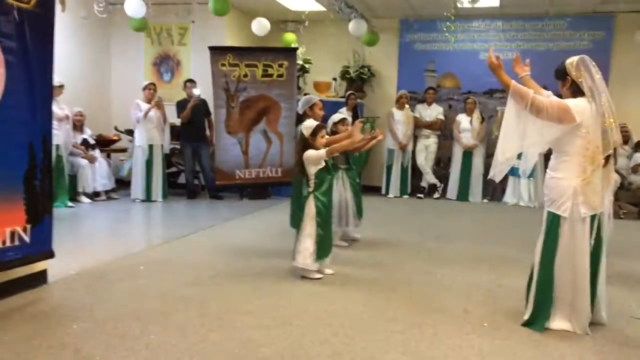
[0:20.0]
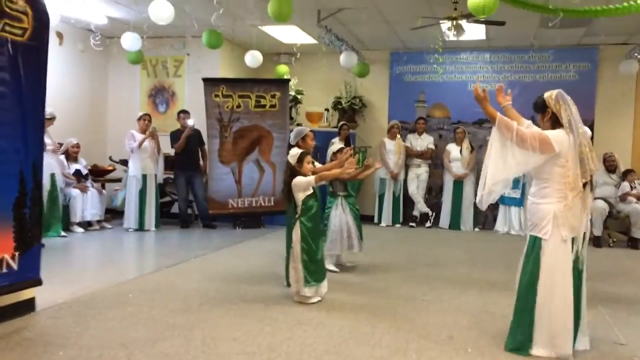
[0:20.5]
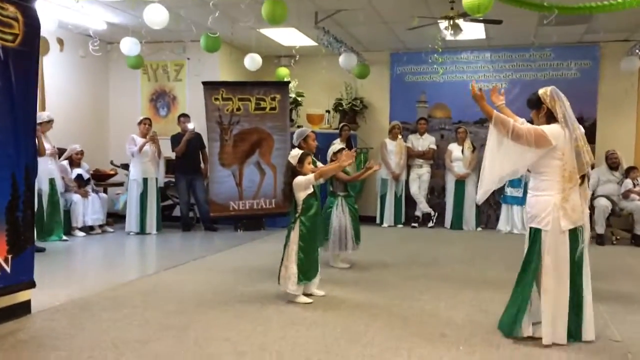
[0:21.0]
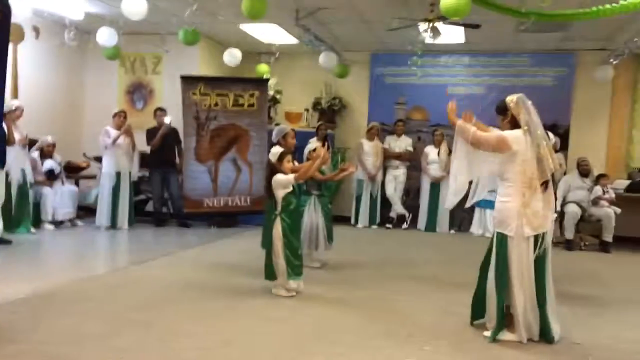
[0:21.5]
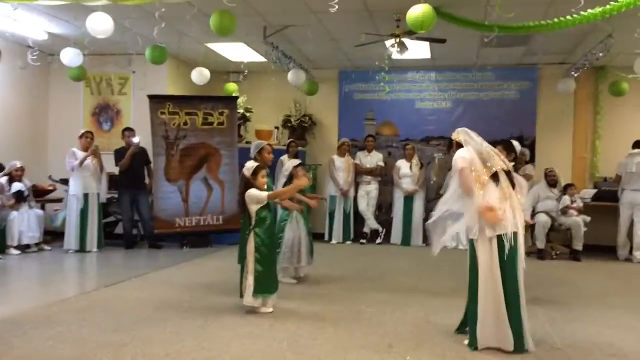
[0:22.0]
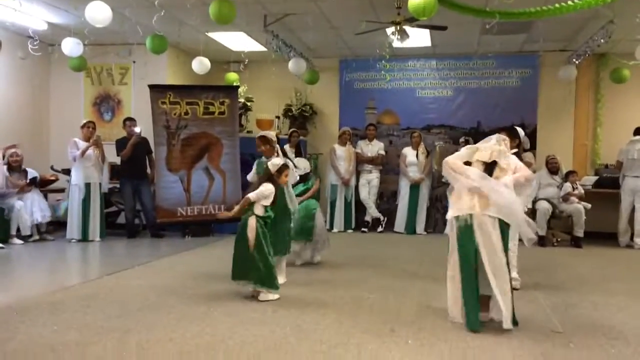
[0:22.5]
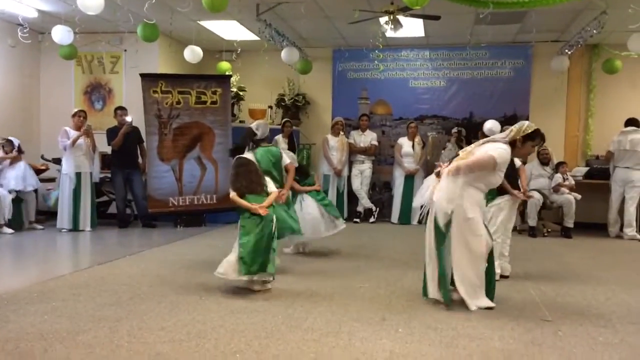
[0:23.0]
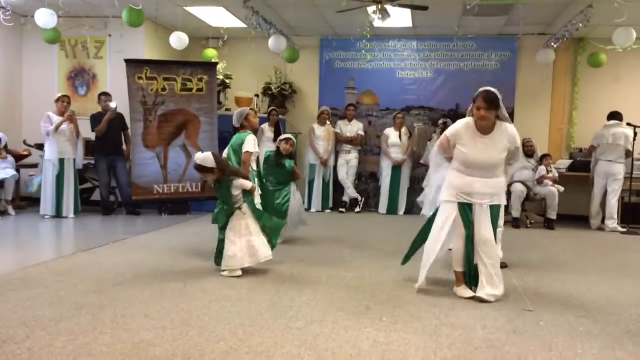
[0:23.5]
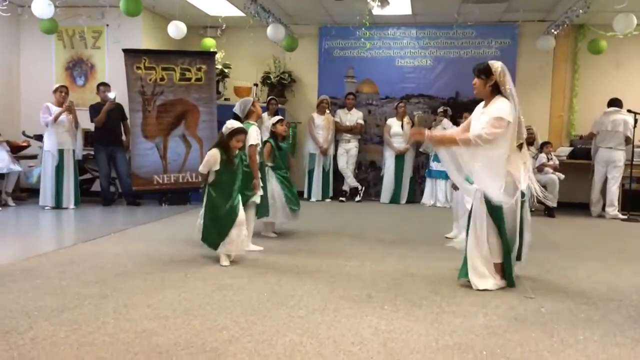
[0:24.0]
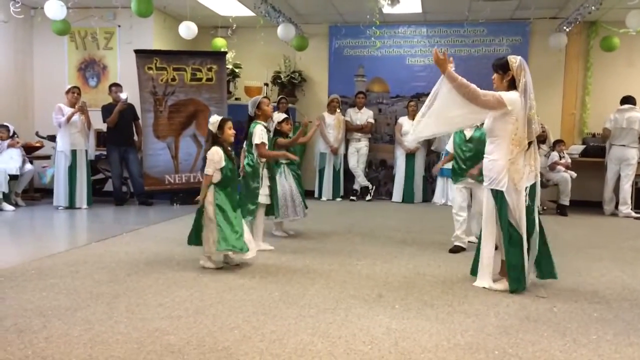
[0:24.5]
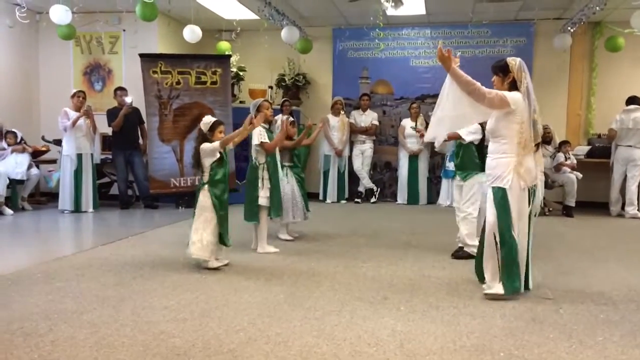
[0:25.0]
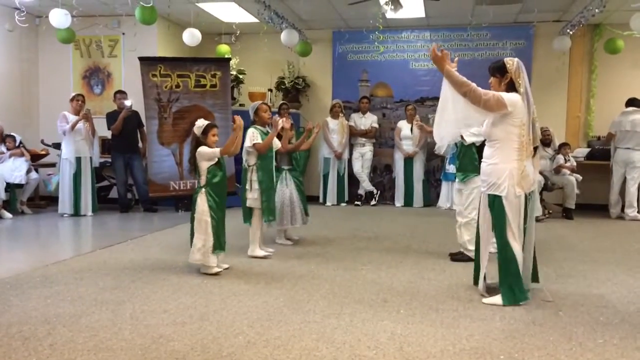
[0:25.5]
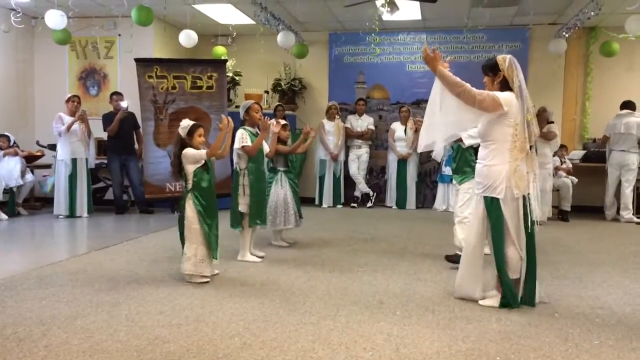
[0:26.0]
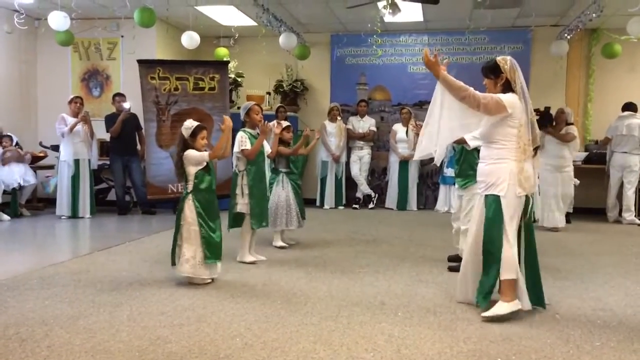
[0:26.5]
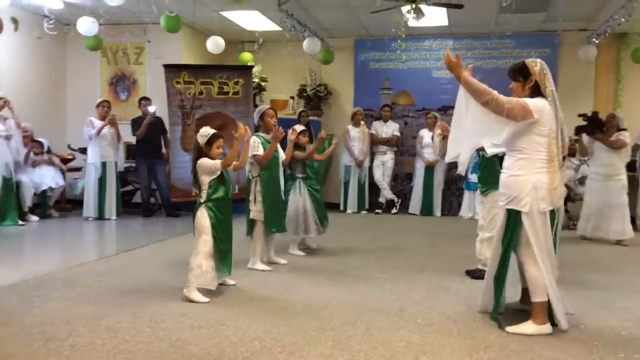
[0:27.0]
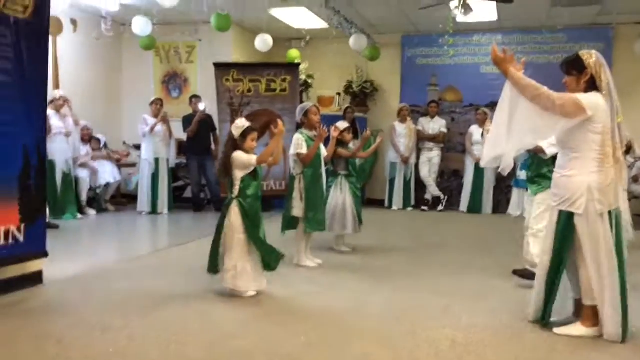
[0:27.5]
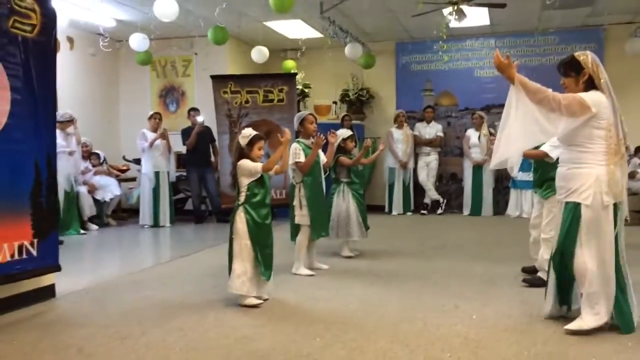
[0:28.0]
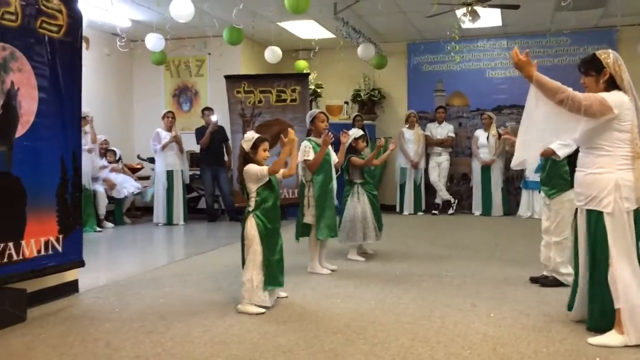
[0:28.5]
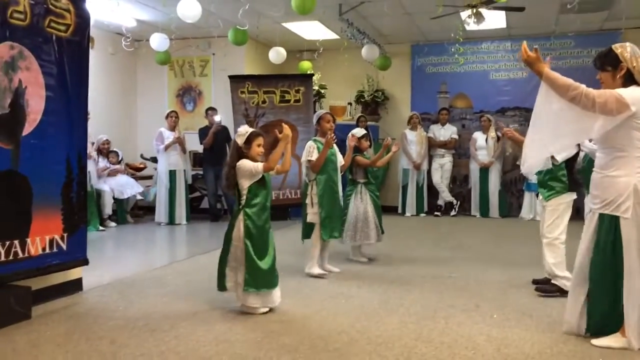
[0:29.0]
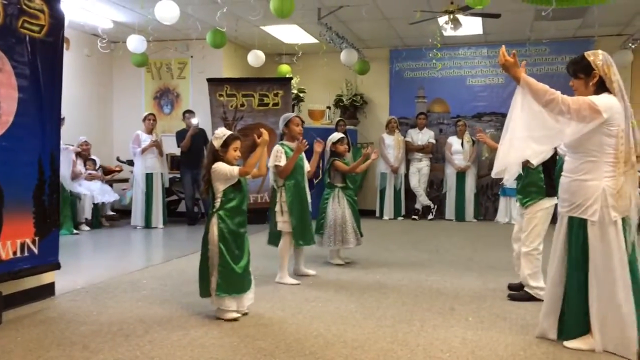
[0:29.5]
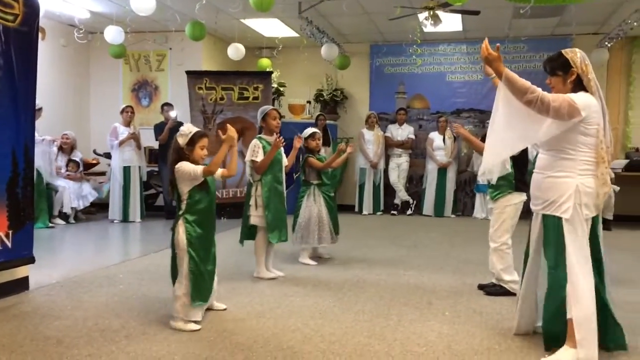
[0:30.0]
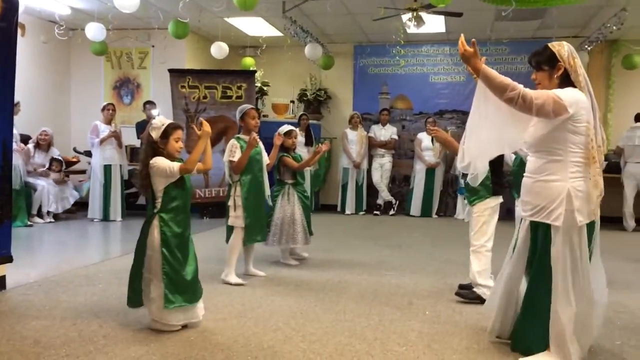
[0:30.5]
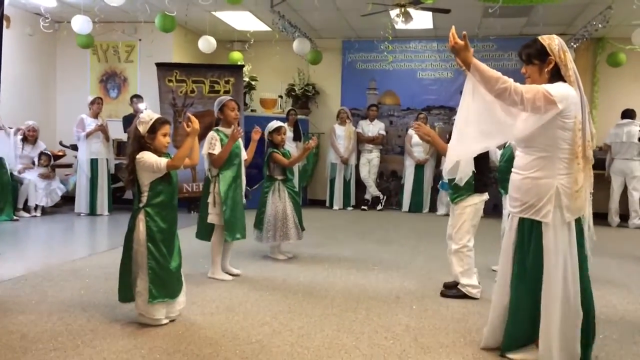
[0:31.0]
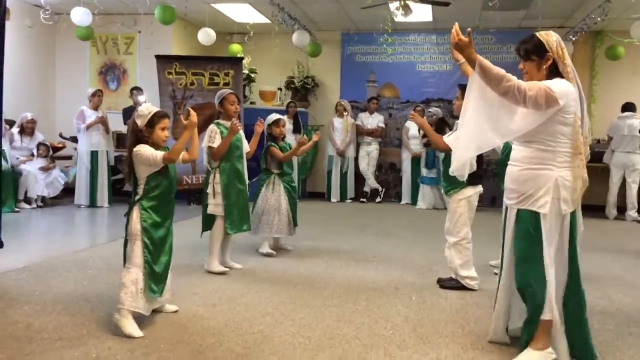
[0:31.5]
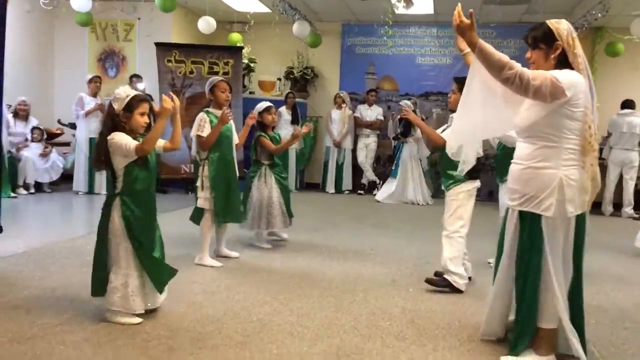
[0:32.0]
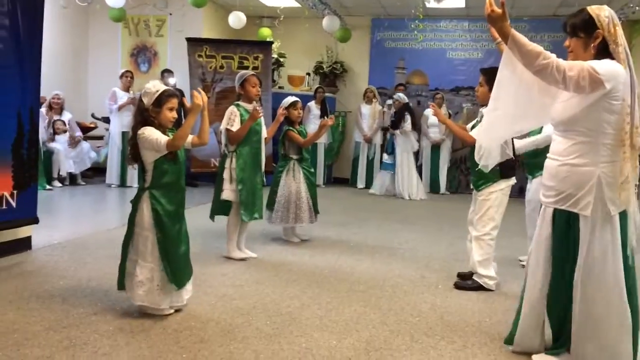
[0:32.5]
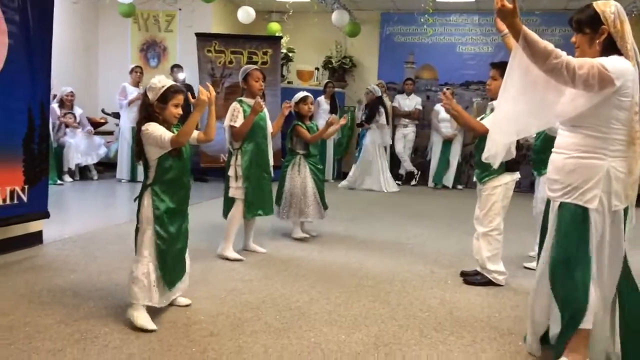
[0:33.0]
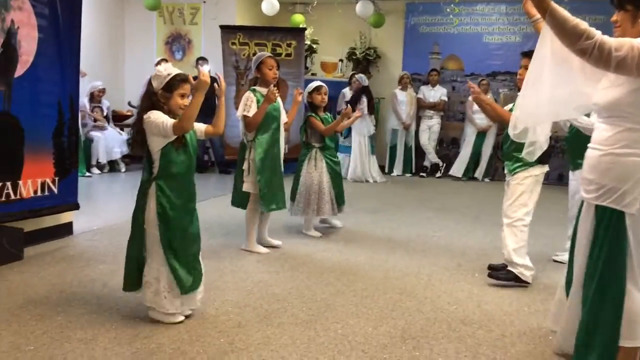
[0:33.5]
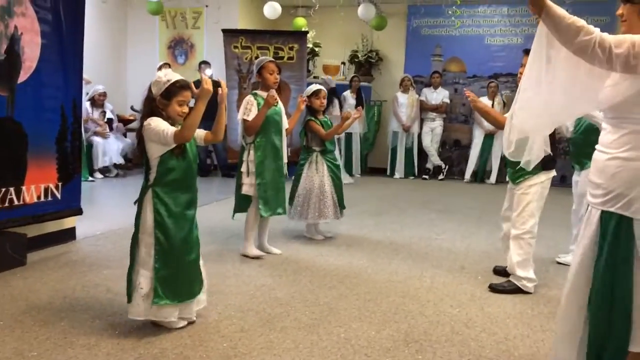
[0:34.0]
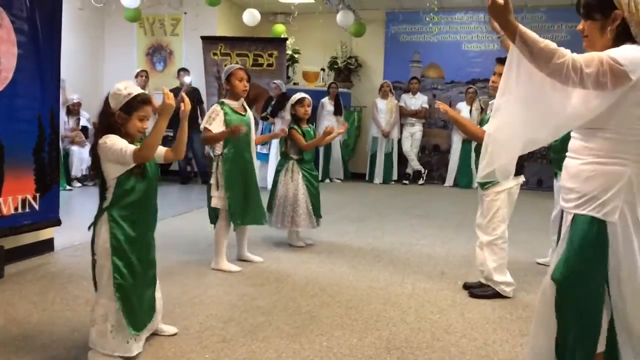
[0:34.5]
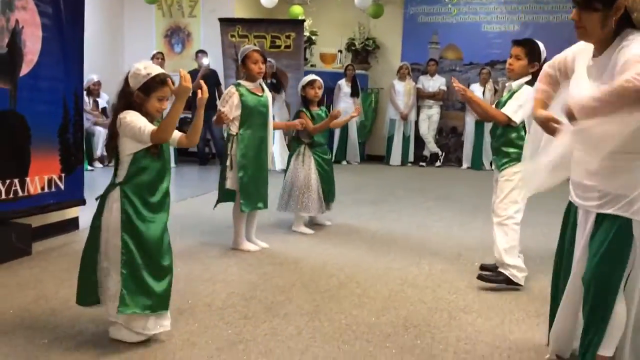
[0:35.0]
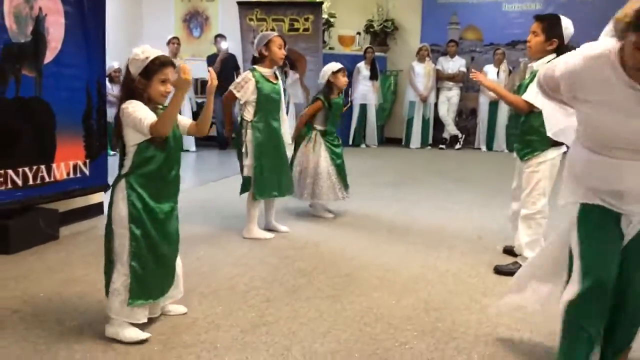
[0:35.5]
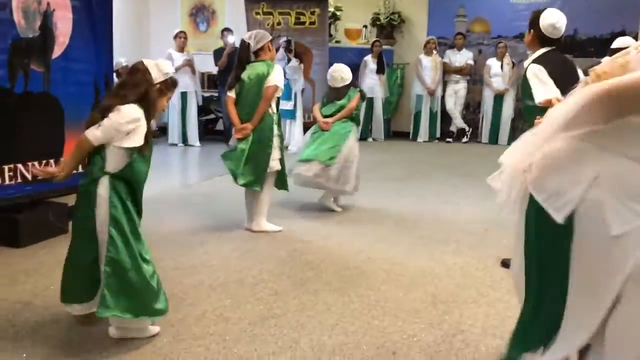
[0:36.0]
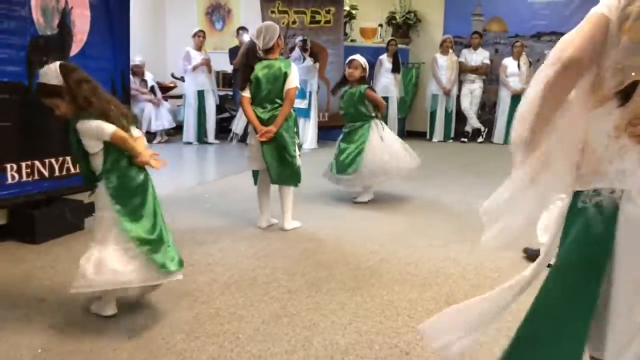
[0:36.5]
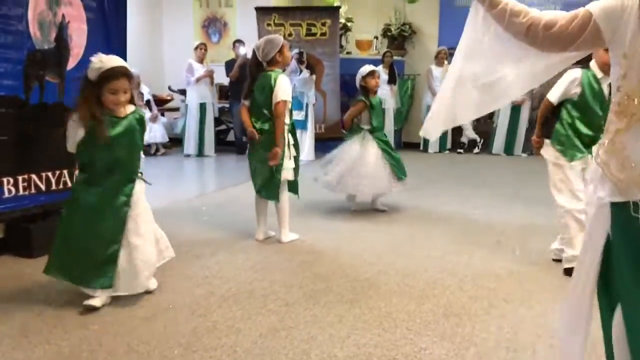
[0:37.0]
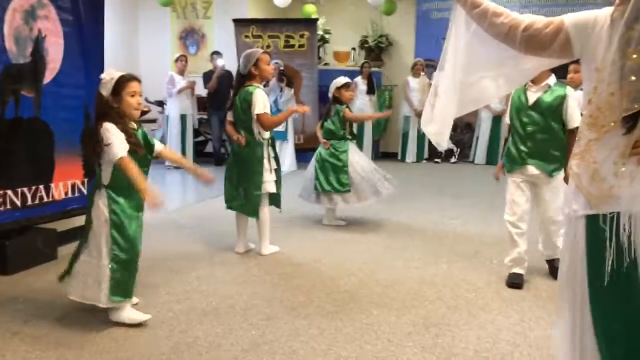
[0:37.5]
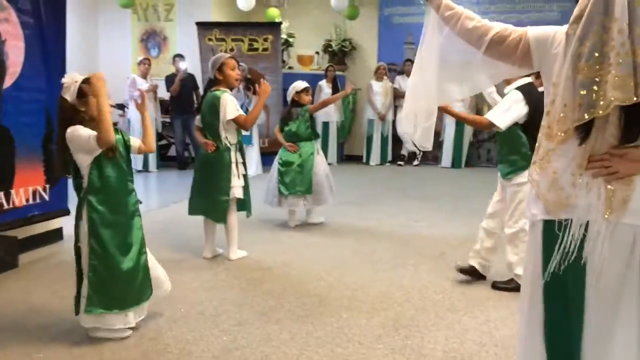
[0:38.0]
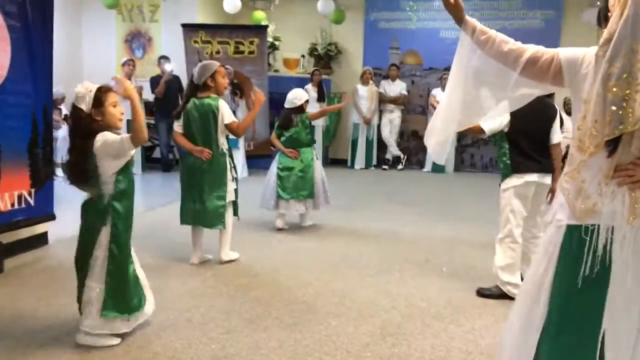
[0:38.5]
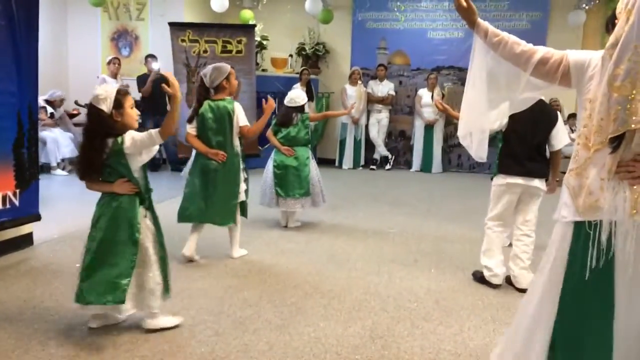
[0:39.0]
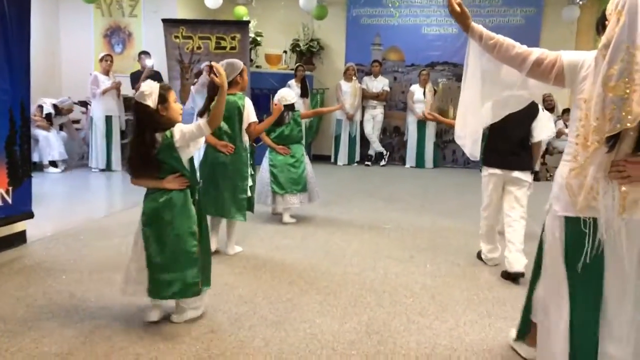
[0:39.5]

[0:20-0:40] On the left side, the women wear green and white, mostly green skirts with white everything else, including their hair scarves. Most of the men appear to wear white, though a man on the left has a black shirt and denim blue jeans. The children keep dancing: in one part they slide a few steps, the boys moving toward their right and the girls toward their left, then put their hands behind their backs and twirl around a bit. As they do this, people are recording, including the man in the black shirt and jeans.